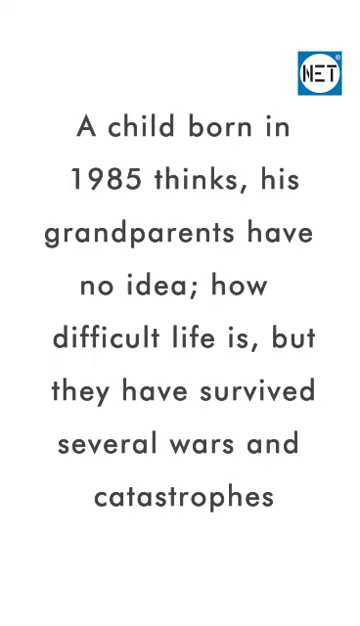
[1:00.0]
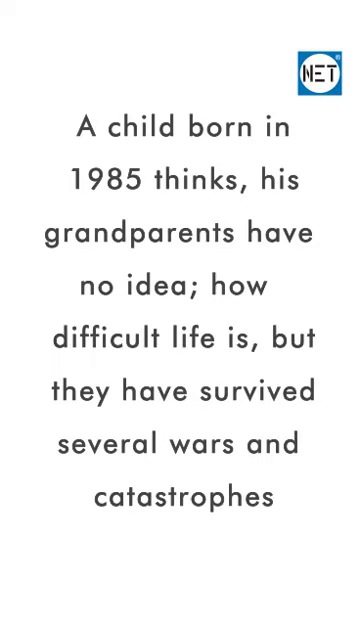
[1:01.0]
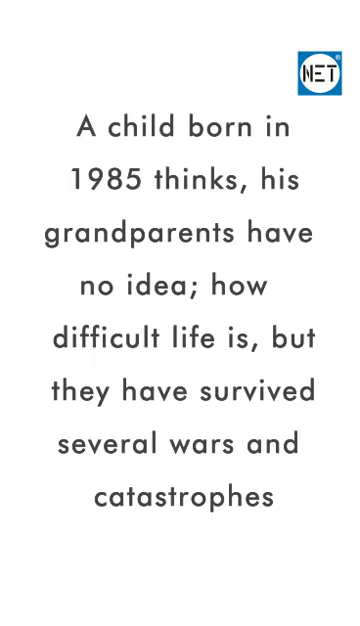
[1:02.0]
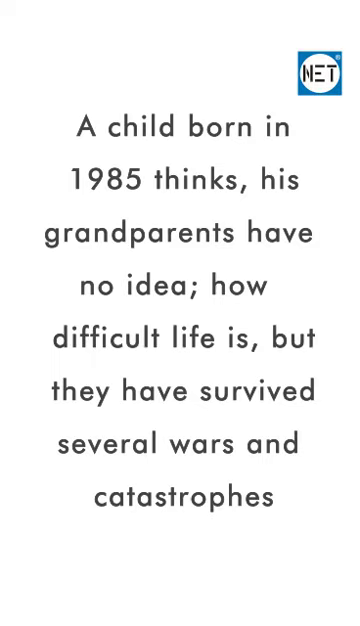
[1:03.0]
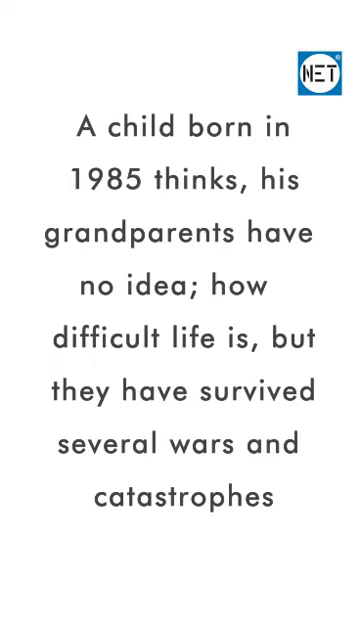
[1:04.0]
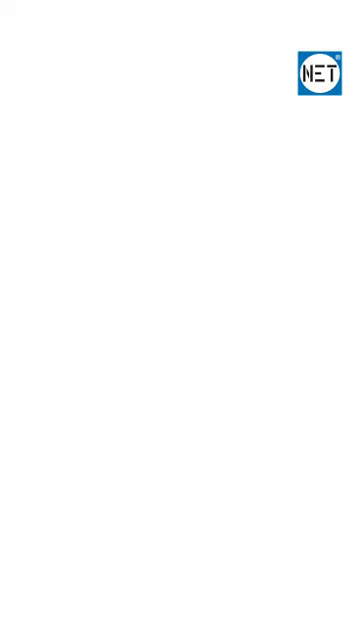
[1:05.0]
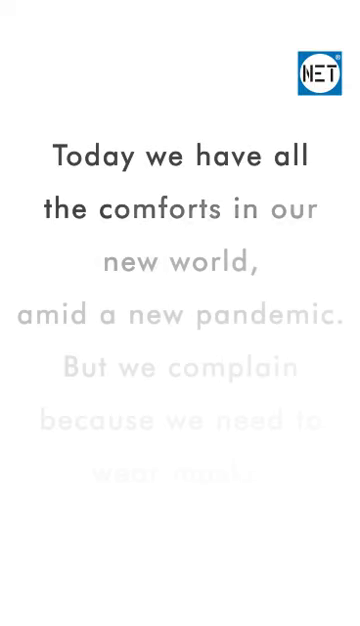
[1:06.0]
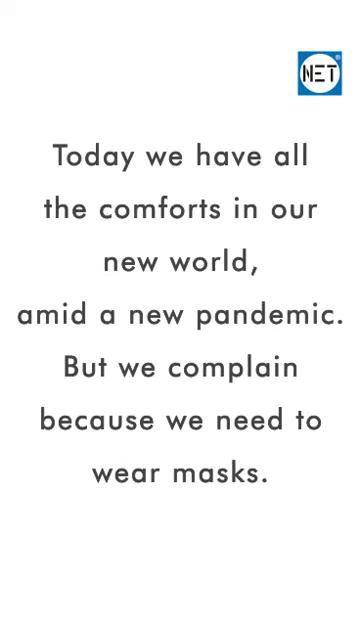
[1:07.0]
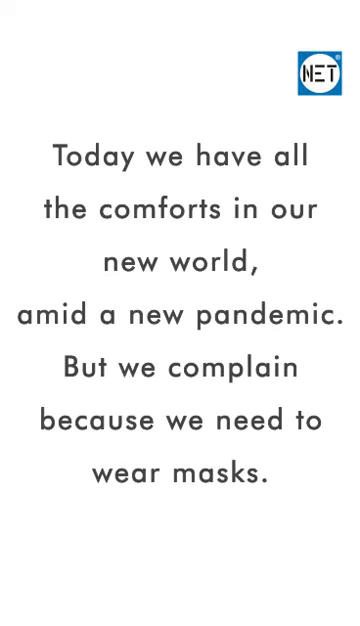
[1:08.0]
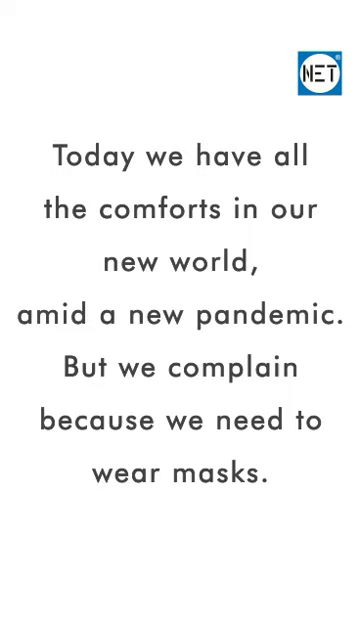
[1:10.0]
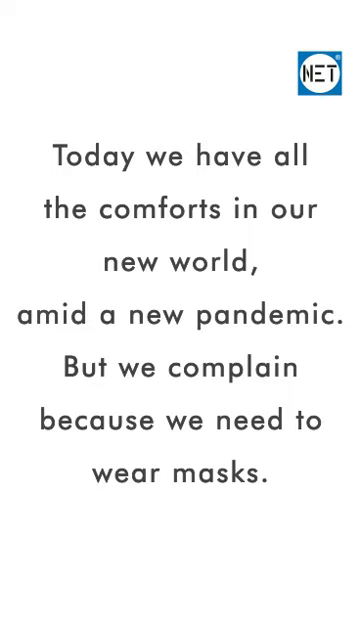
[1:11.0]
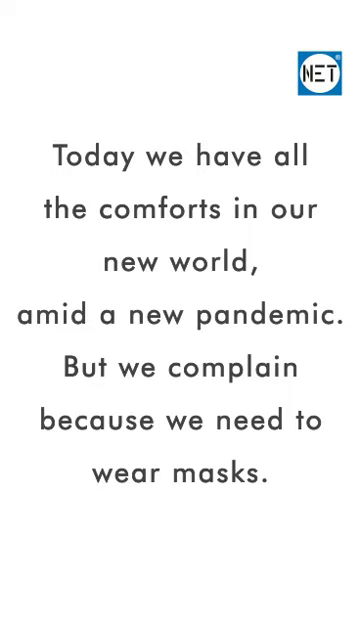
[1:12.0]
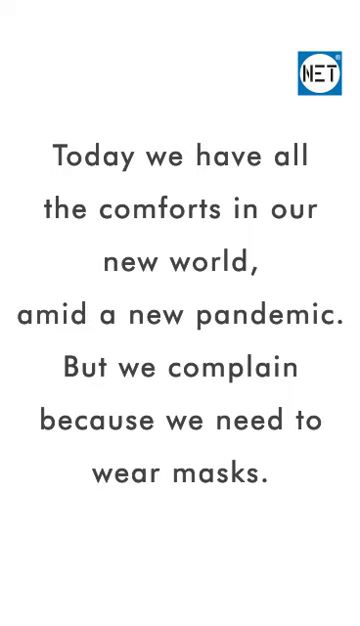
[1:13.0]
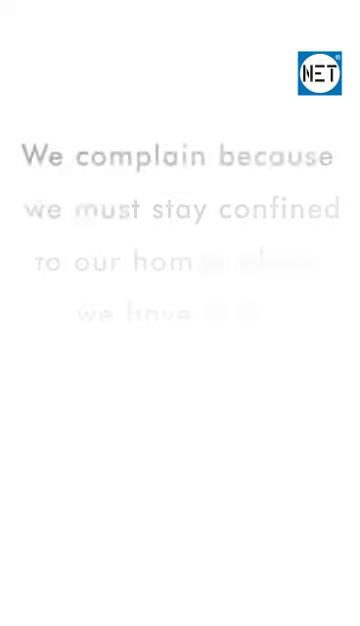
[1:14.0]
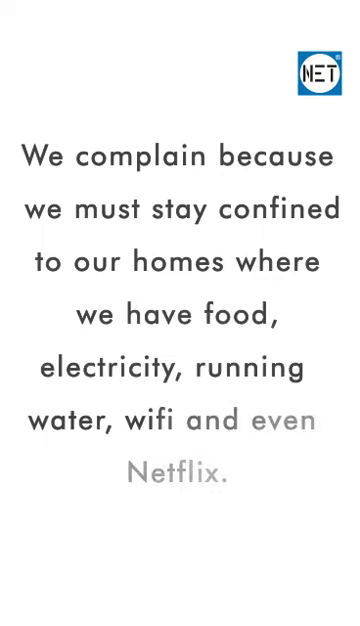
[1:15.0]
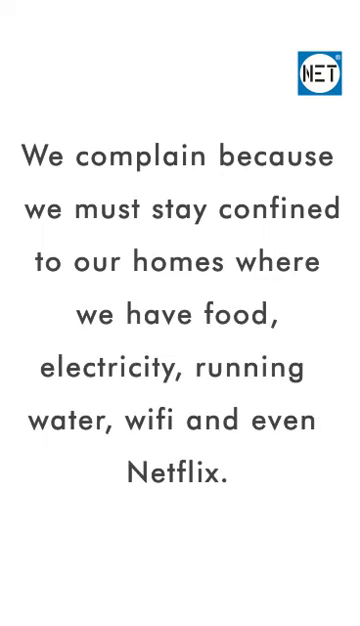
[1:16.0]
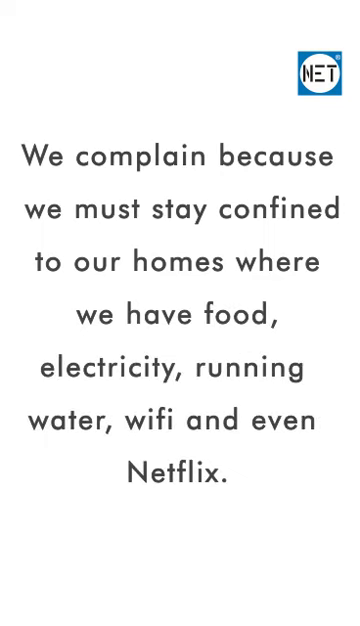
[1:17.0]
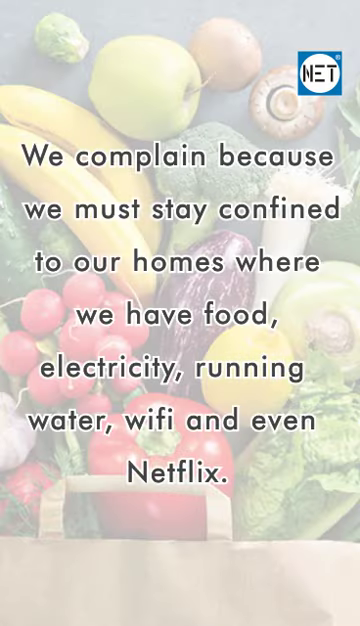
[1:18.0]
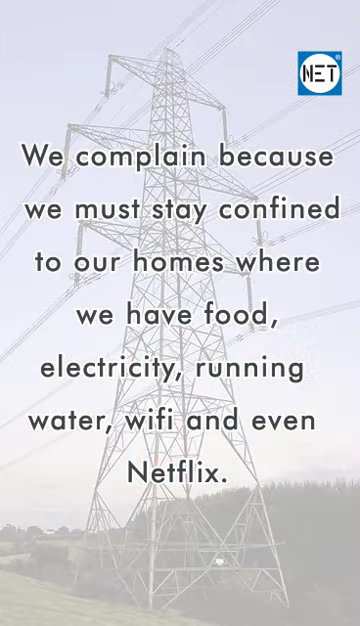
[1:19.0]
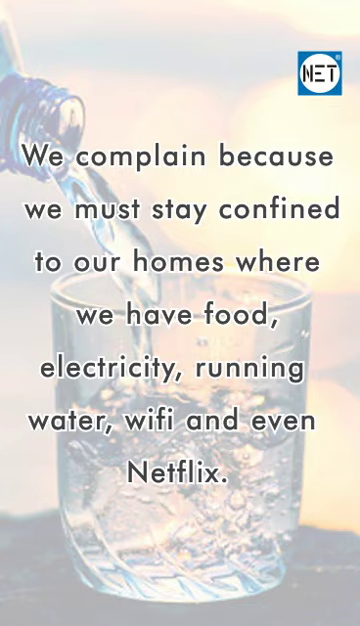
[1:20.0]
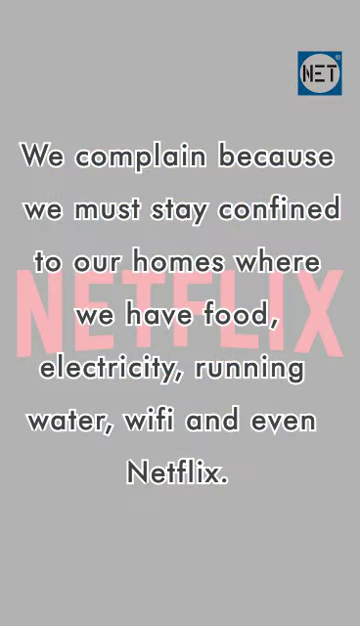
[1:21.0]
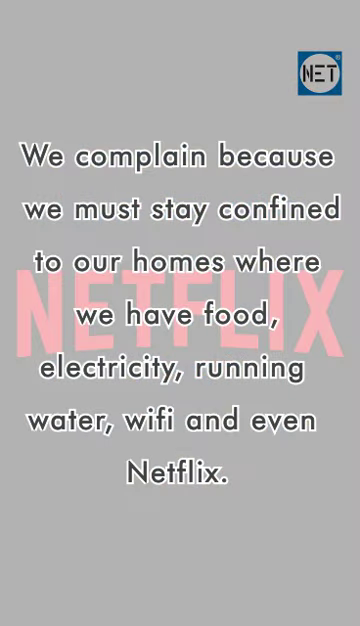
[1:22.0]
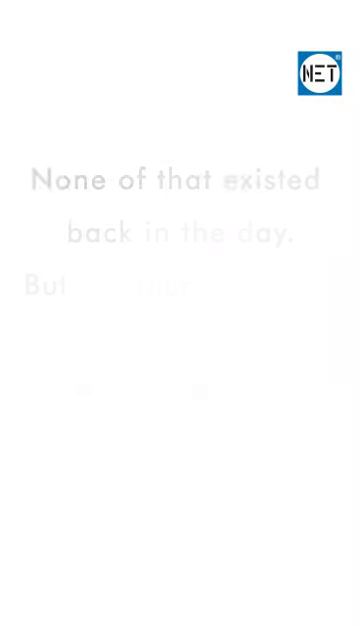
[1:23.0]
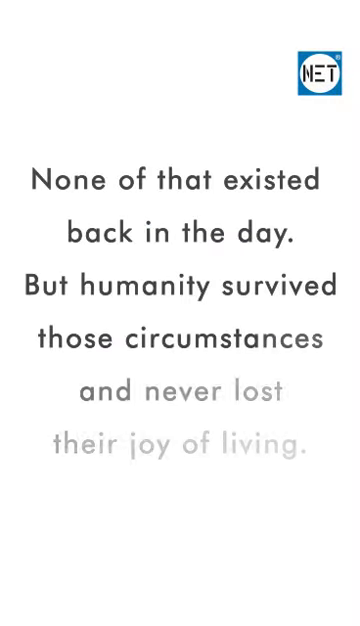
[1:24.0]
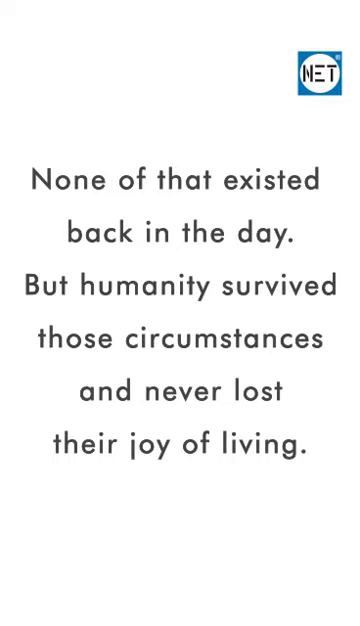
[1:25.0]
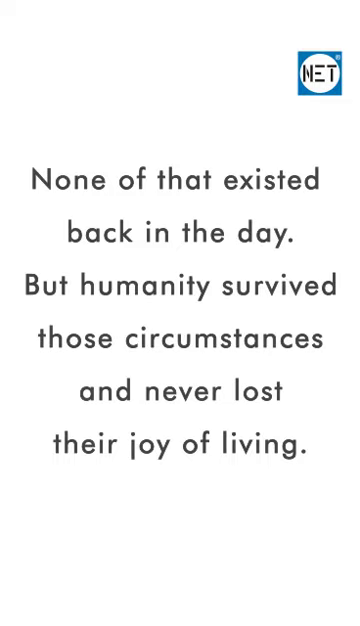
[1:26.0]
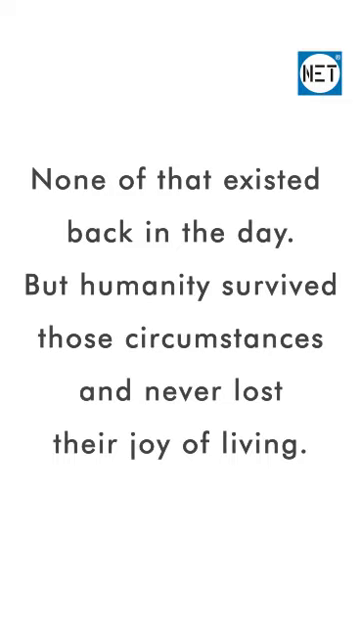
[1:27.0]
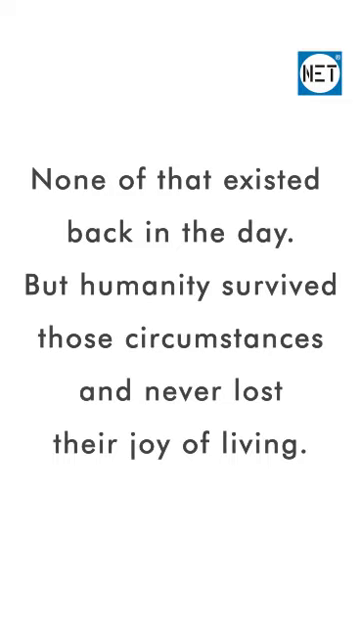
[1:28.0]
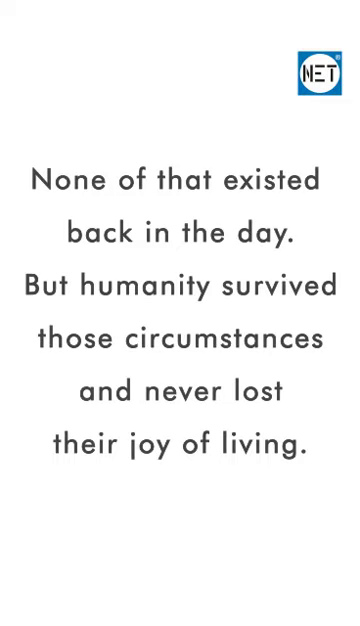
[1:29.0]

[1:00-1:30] The text about the child born in 1985 continues, contrasting how their parents and grandparents lived through these events, and comparing it to the pandemic, with things like water, electricity and Netflix that earlier generations never had. In the background are pictures of fresh fruit, Netflix, a Wi-Fi symbol and cell towers.